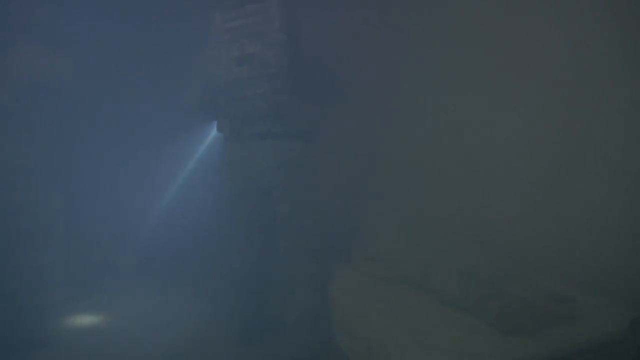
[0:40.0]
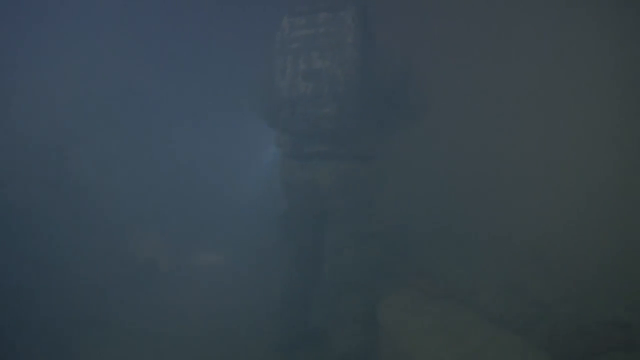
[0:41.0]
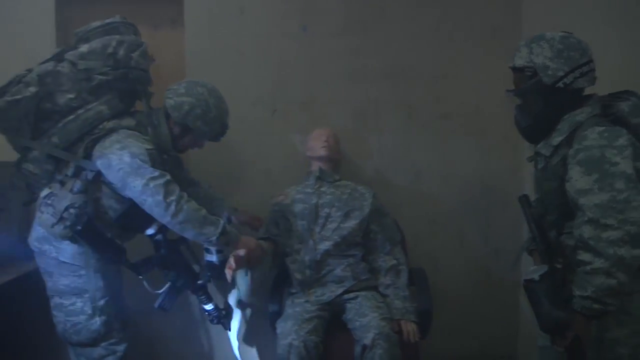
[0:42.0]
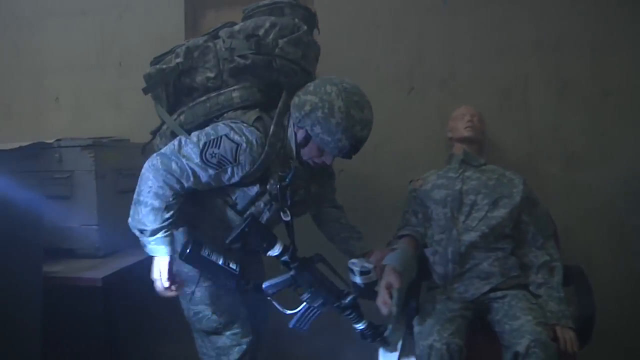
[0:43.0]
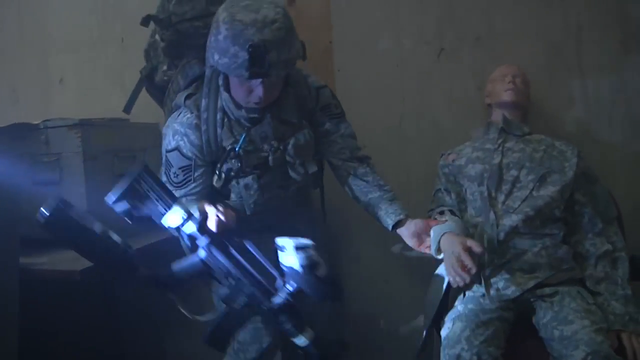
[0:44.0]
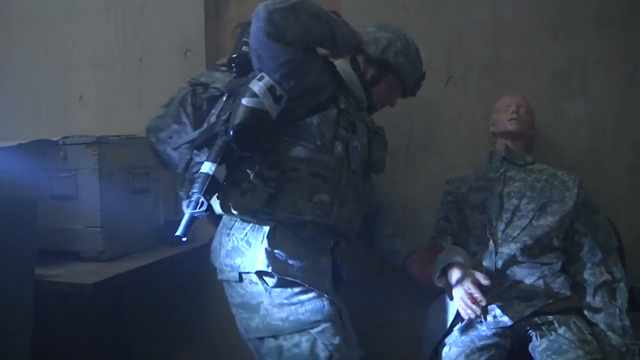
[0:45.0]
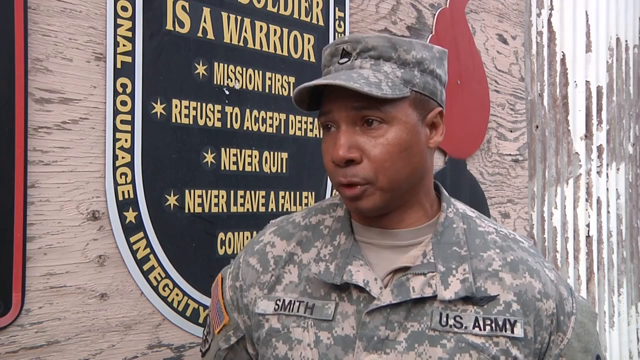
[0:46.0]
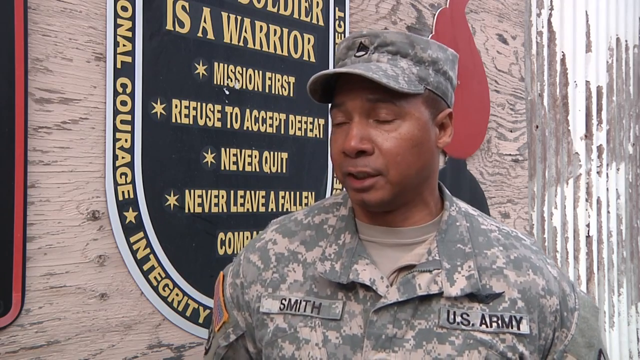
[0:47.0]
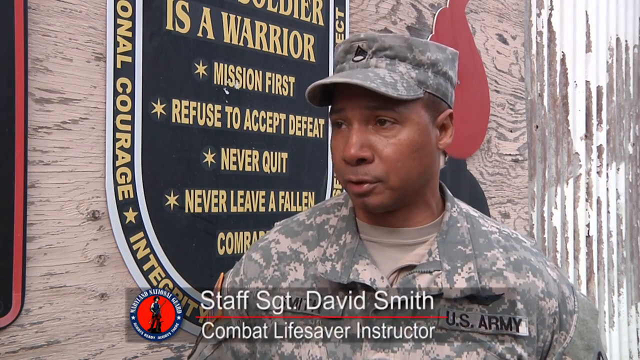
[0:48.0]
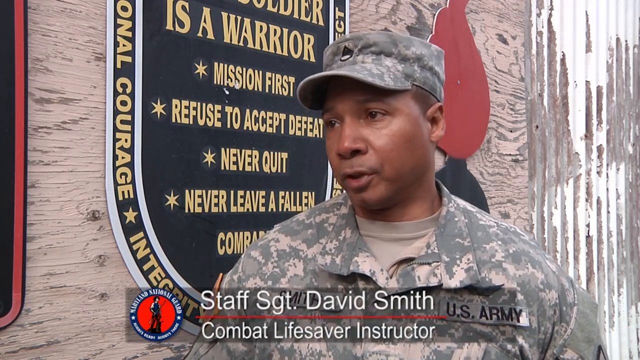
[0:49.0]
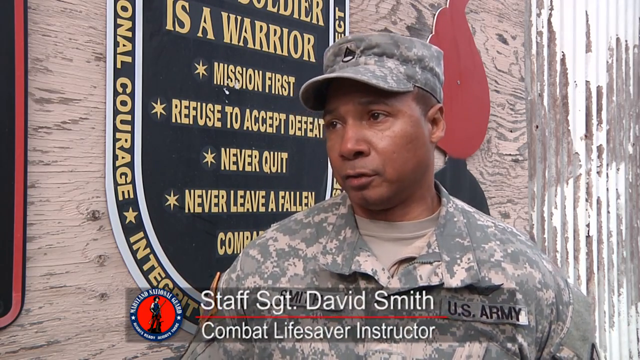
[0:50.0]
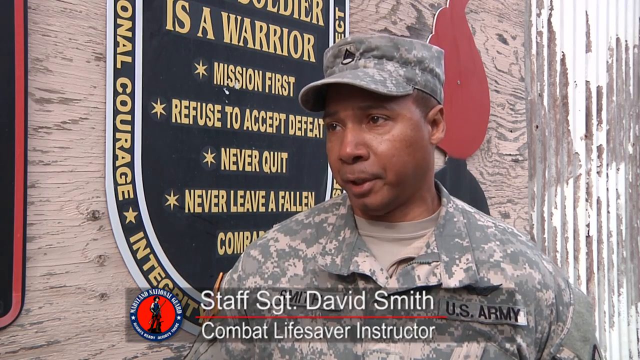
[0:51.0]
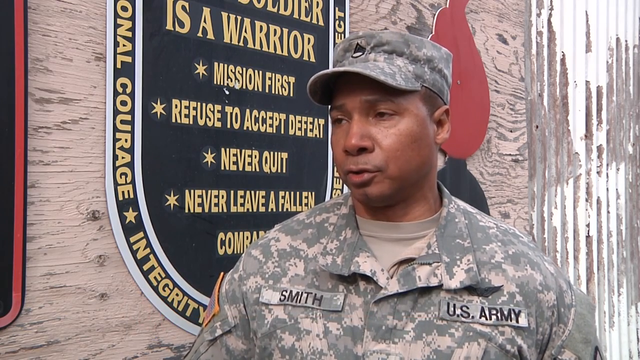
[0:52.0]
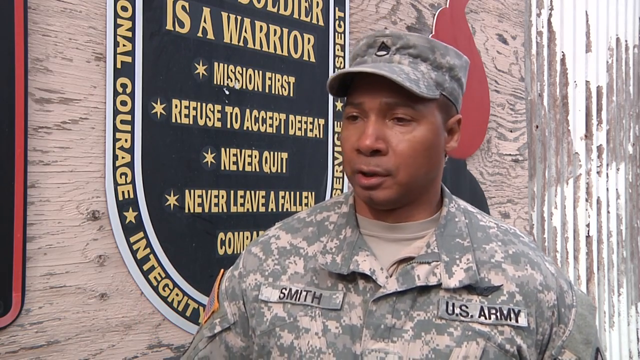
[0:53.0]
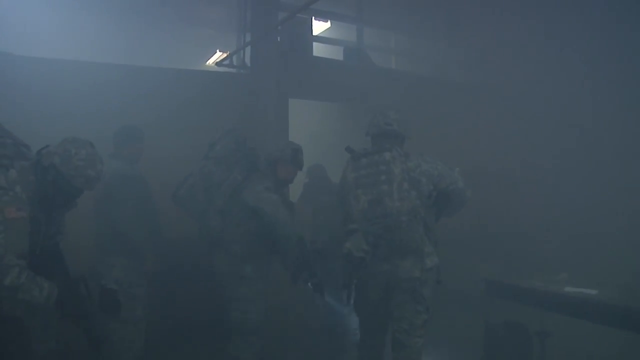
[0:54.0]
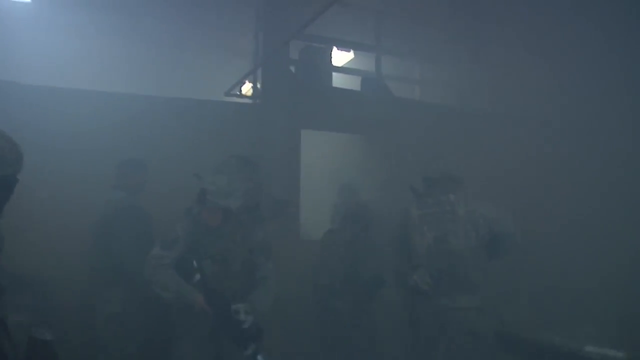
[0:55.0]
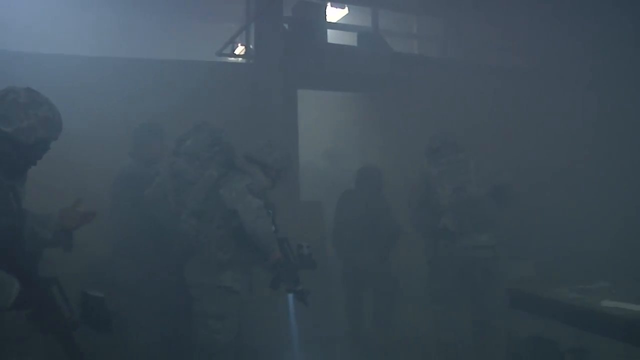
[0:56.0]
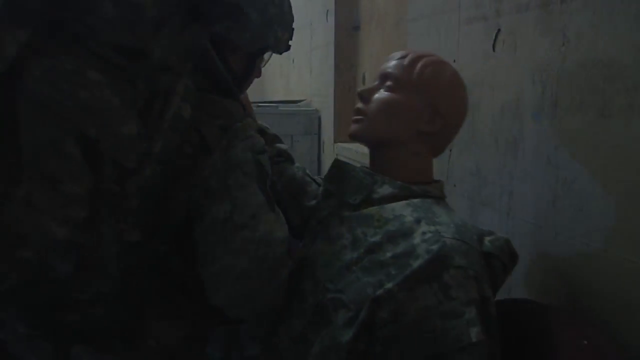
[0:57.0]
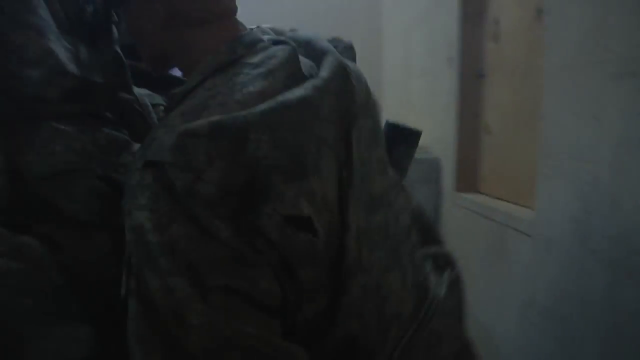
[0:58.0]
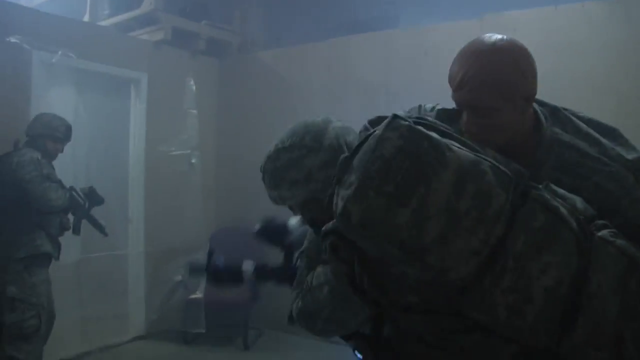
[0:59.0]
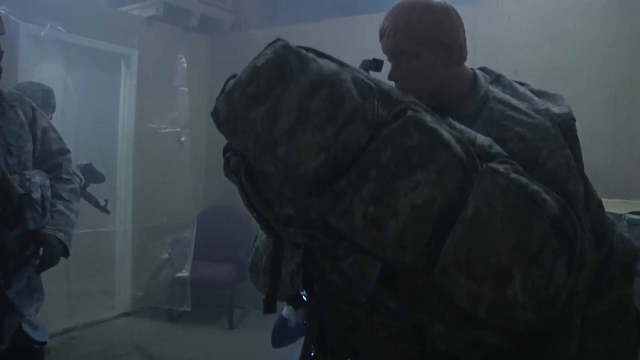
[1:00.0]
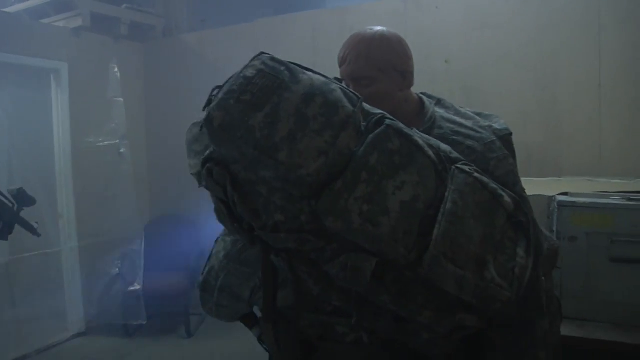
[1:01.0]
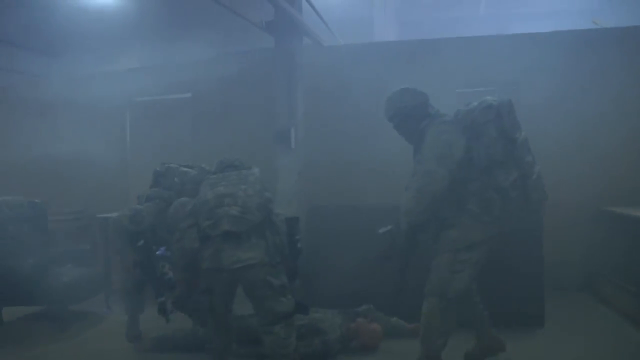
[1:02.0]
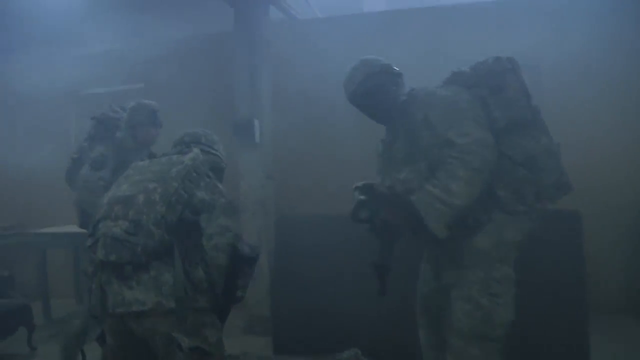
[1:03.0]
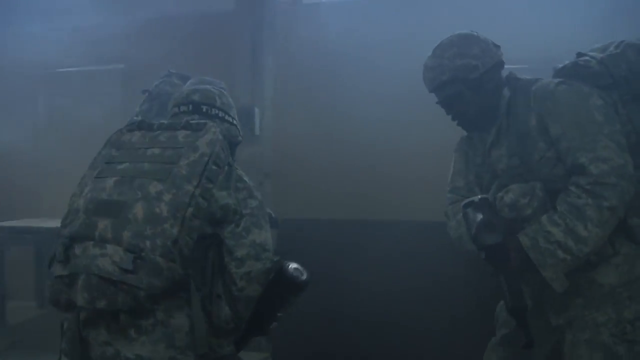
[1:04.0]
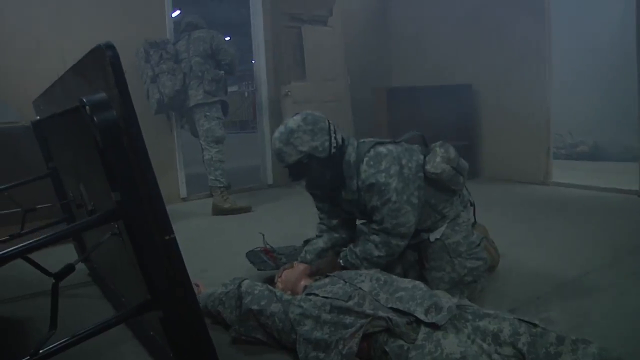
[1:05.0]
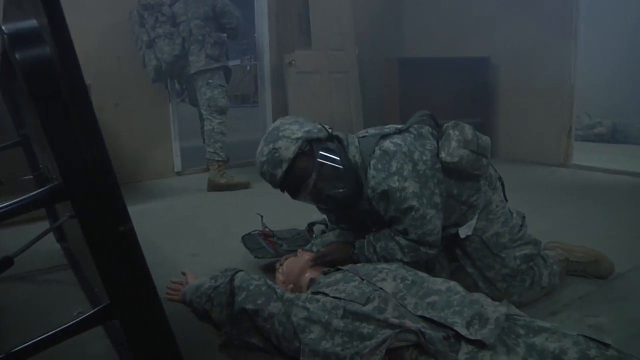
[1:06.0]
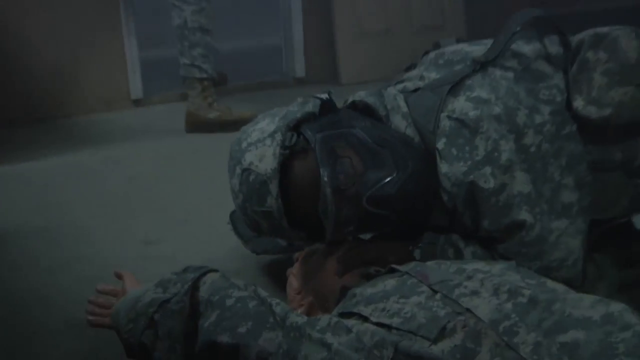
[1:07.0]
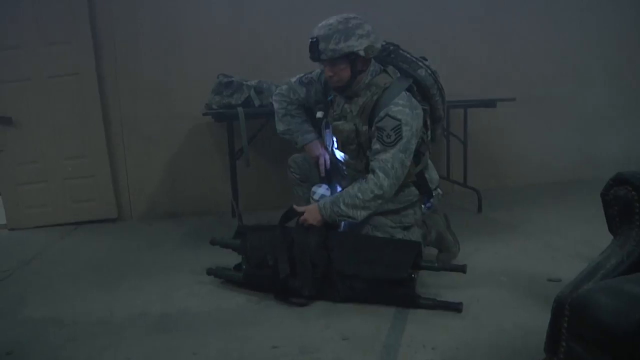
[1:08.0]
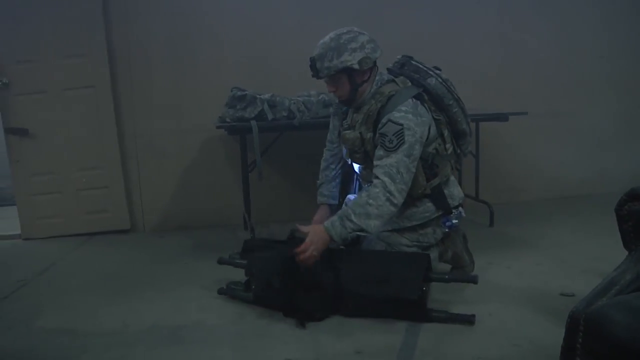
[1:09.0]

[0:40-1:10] In a dark room, soldiers are training and attending to a demo soldier. Two of the soldiers are busy trying to help the wounded soldier they found in the room. The wounded soldier is seated on a chair, and one of the soldiers holds his hand, probably trying to feel his pulse. Staff Sergeant David Smith, a combat lifesaver instructor, appears in his soldier regalia in an interview, answering questions. The scene returns to the soldiers on the rescue mission in the dark room, using torches to light it up. One of the soldiers lifts the wounded soldier and puts him on his back with the help of another soldier, they inspect the room, and the soldiers attend to the wounded soldier, feeling his pulse.